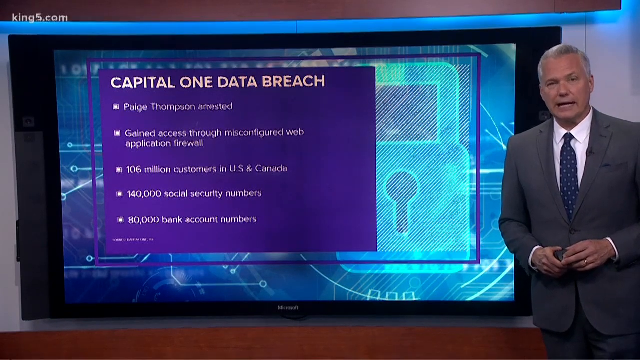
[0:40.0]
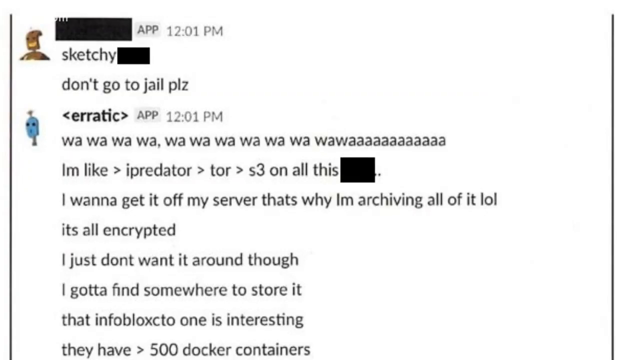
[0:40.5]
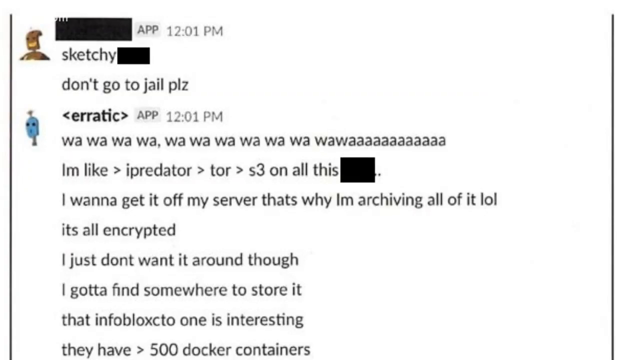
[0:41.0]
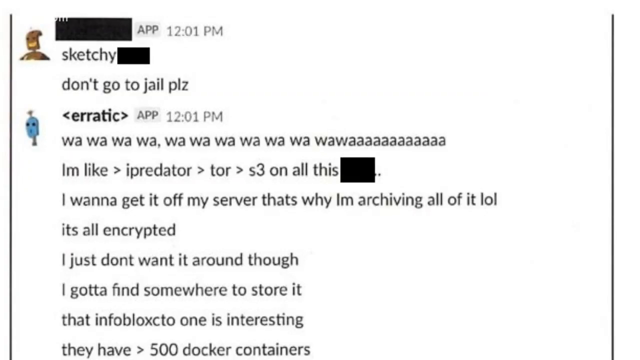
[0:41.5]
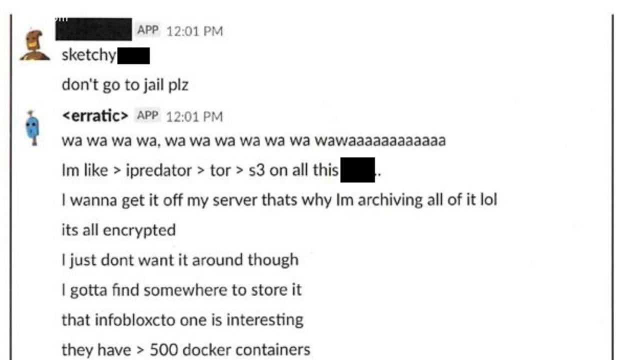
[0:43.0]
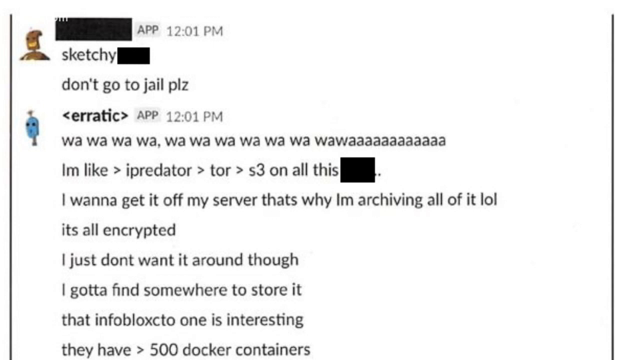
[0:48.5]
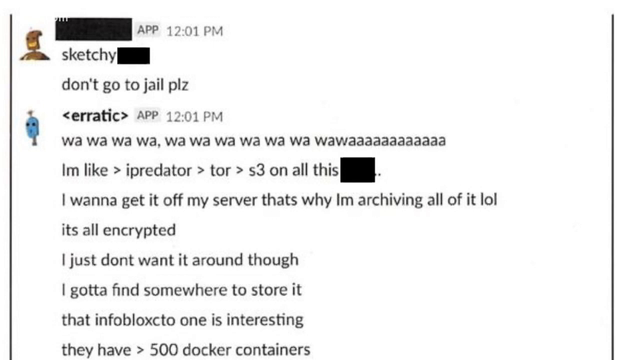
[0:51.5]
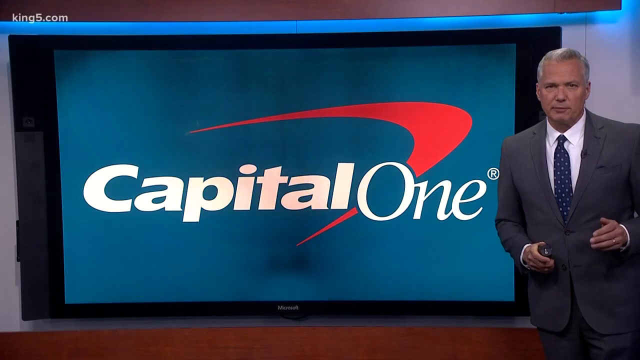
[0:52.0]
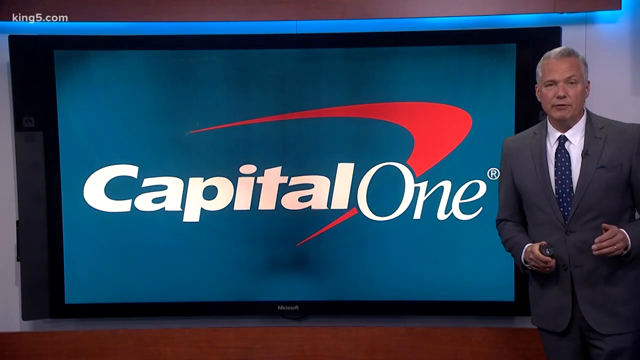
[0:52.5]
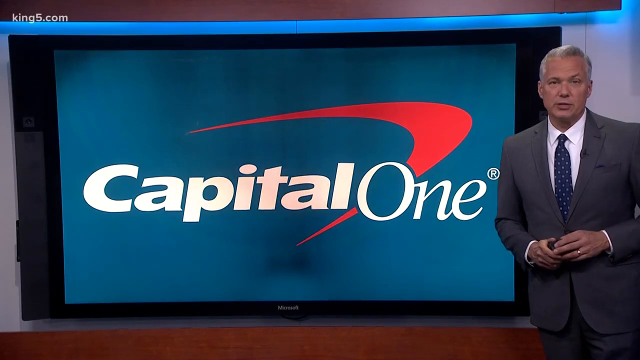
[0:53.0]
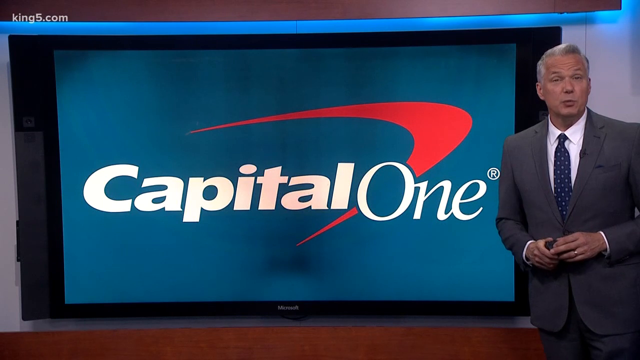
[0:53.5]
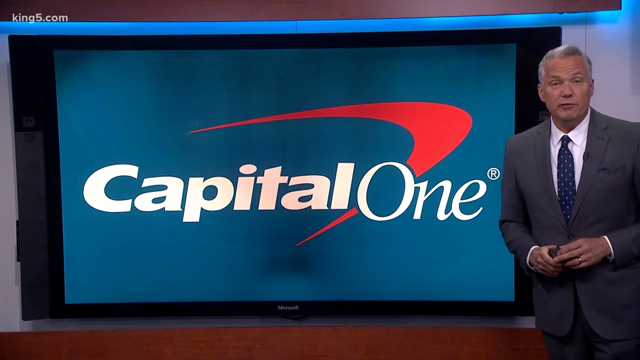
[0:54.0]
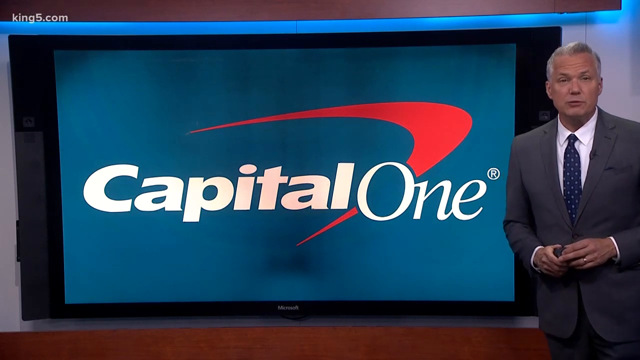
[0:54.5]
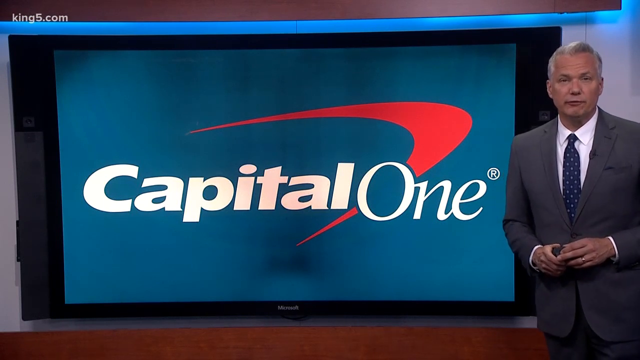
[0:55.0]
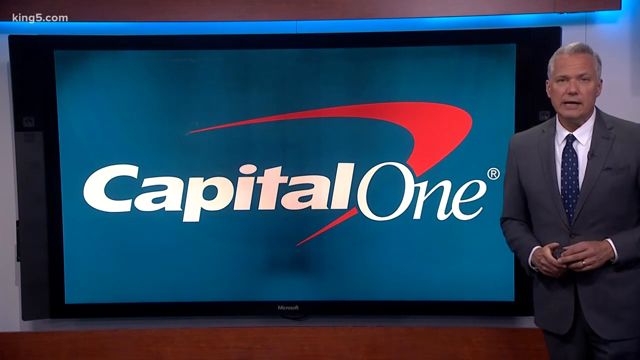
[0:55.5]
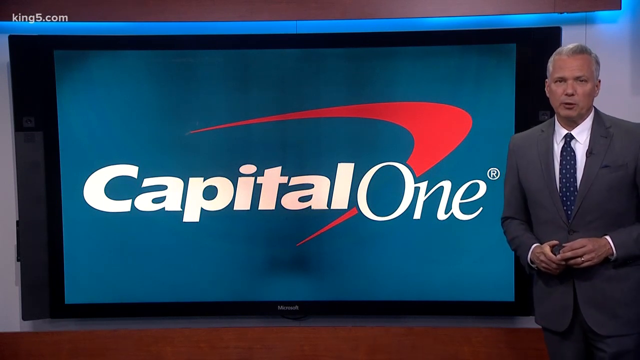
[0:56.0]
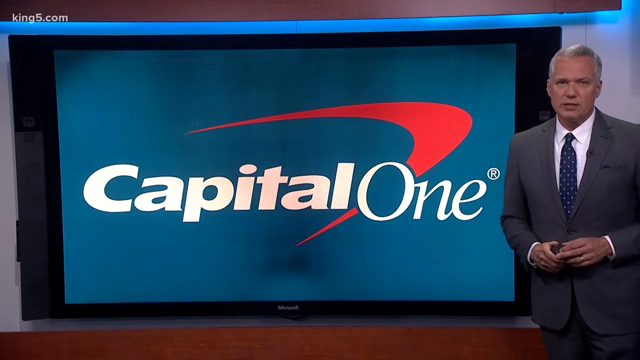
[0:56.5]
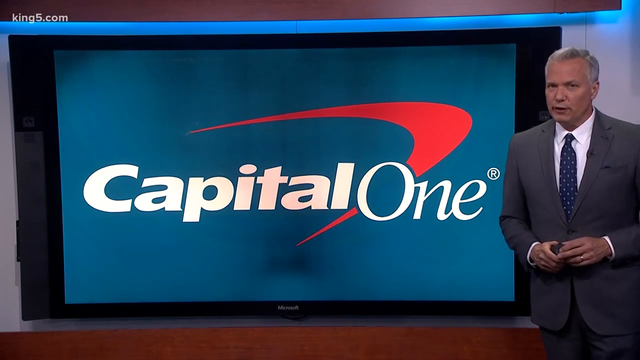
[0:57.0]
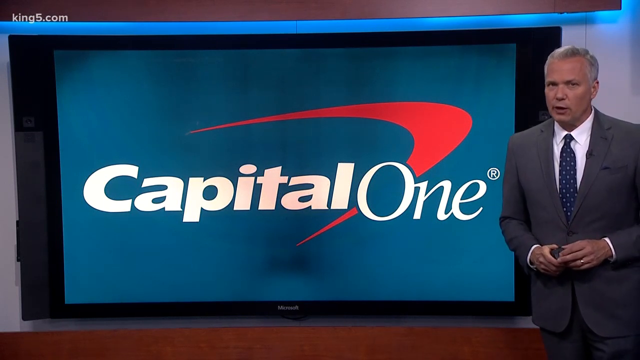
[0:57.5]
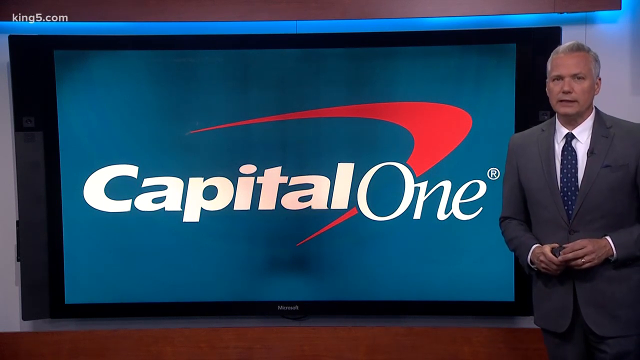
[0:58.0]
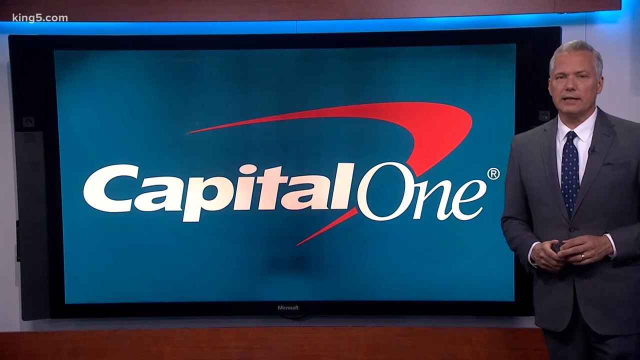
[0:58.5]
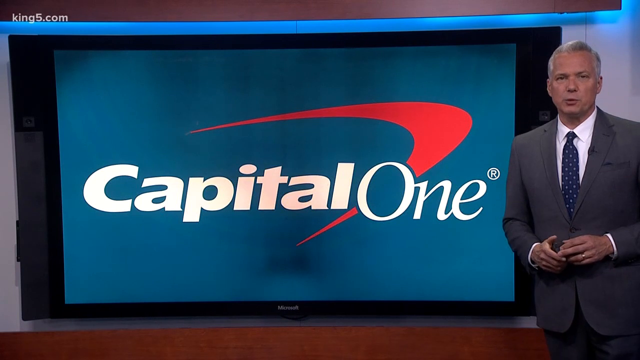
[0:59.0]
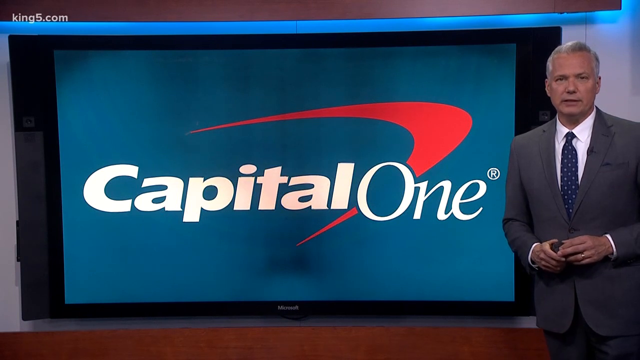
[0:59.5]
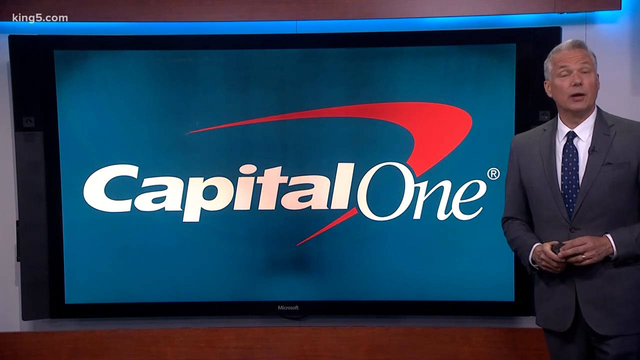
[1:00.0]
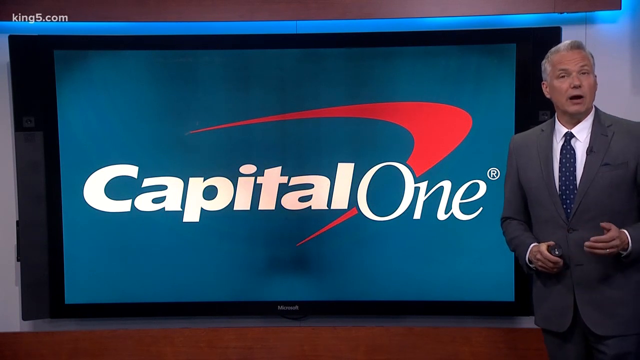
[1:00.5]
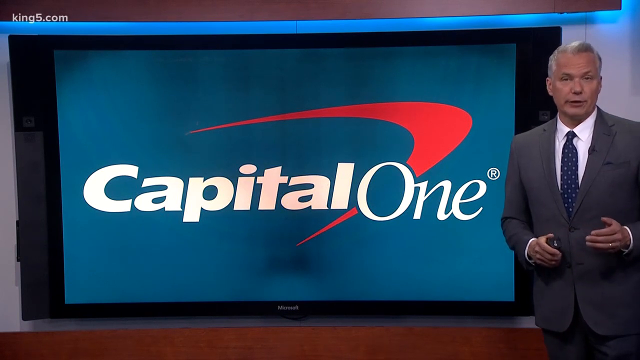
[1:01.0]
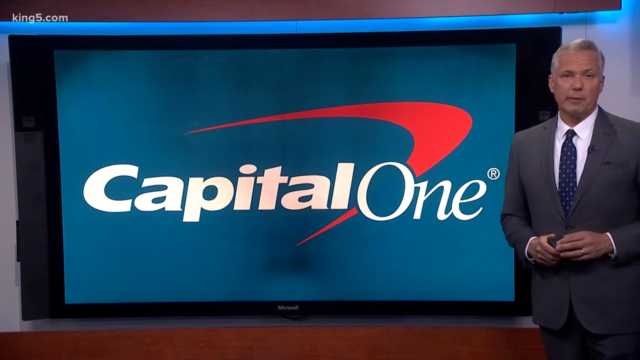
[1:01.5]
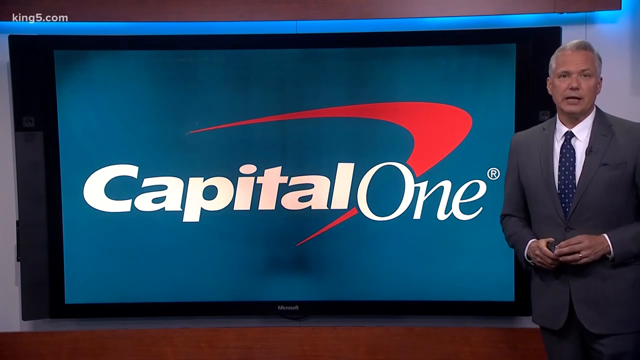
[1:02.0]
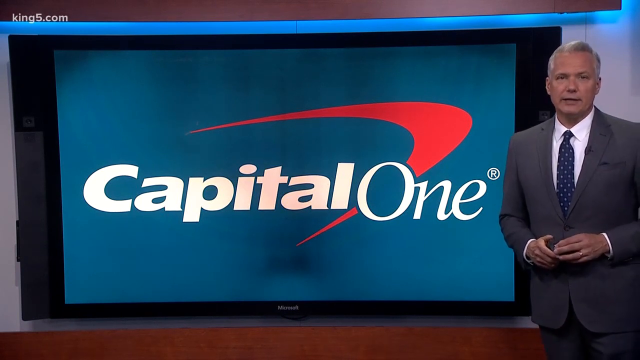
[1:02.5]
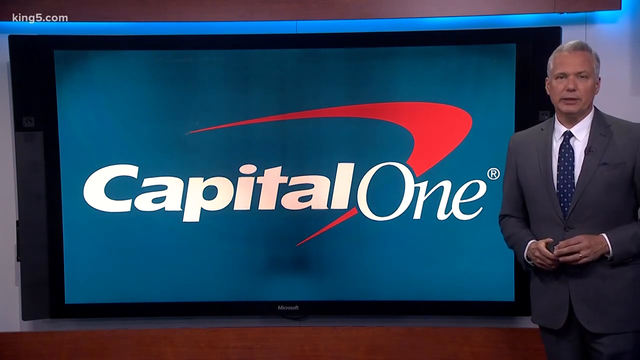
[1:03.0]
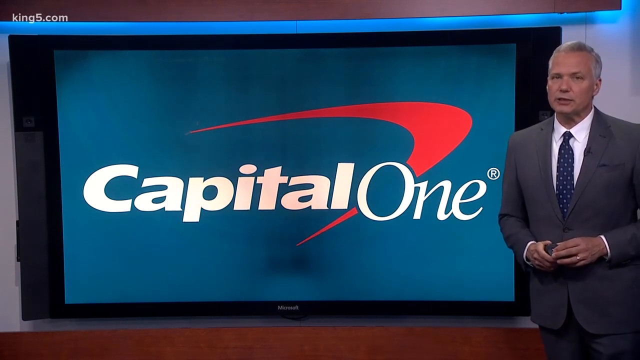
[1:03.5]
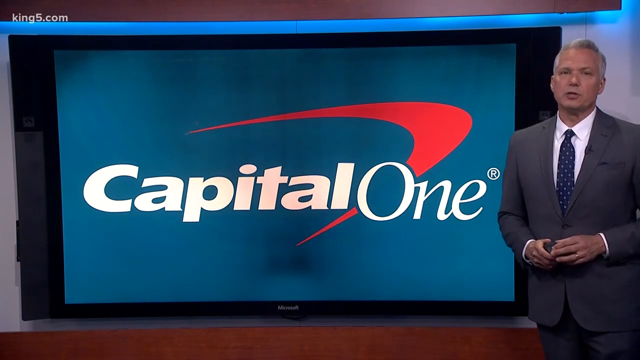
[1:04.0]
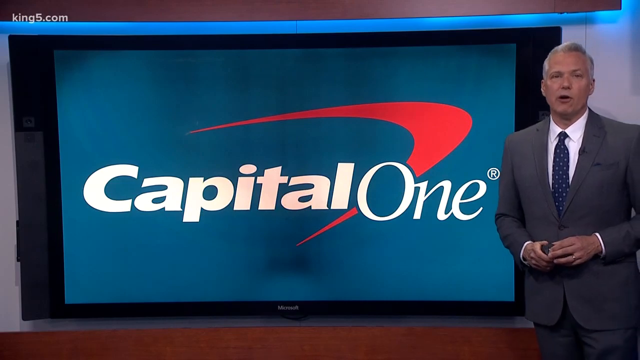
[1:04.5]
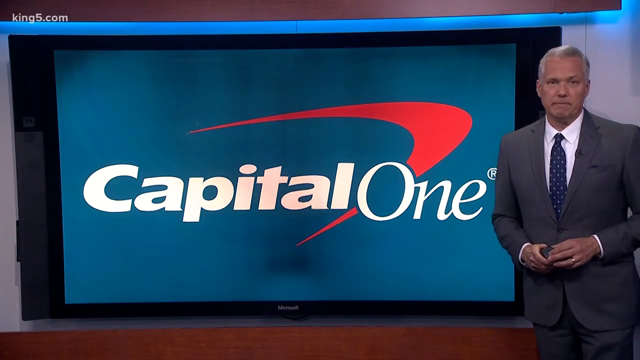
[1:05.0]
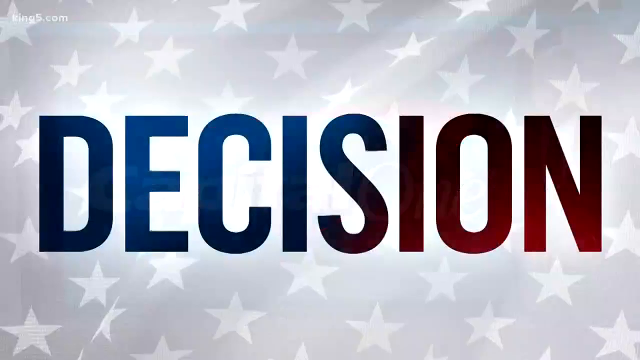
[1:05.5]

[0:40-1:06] A screen transition leads to a white background showing what appears to be a text interaction. There is a brown profile picture, and a black rectangle over a word indicates it has been redacted. Next to it are the words "sketchy", with a black rectangle, and "Don't go to jail, please." There is another profile icon, which is blue, with the word "erratic" in bold black font at 12:01 p.m. The messages include "I want to get it off my server that's why I'm archiving all of it lol it's all encrypted I just don't want it around though I gotta find somewhere to store it that Infoblox CTO one is interesting", with a black square in the text. The video then transitions back to the main screen. "King5.com" is written at the top, and the background is blue with "Capital One" written in white letters. A red boomerang is drawn through "Capital One" and looks as if it is being thrown to the right. At the far right is the original news anchor, an older white middle-aged man with gray hair, wearing a brown or gray suit, a white button-down collared shirt and a blue polka-dot tie.